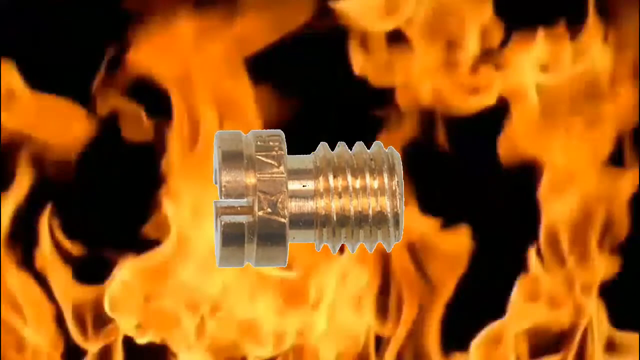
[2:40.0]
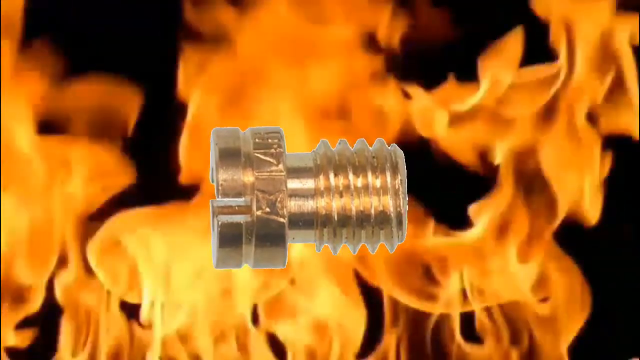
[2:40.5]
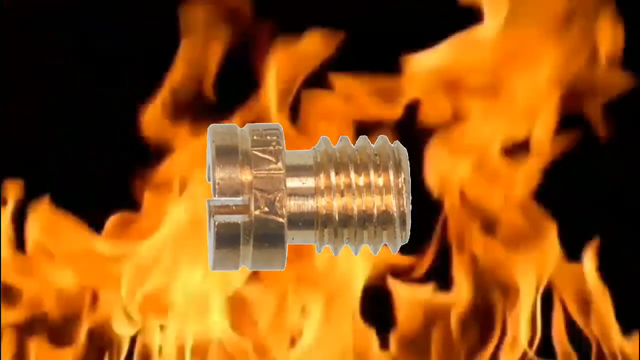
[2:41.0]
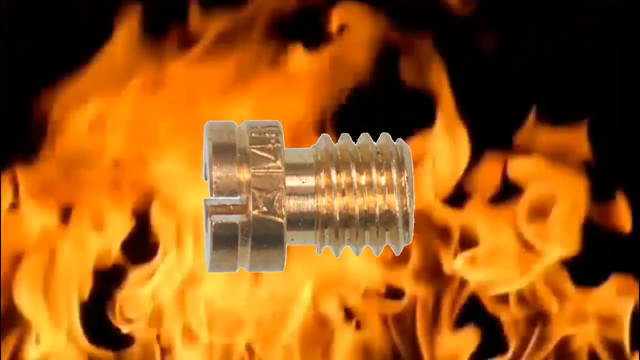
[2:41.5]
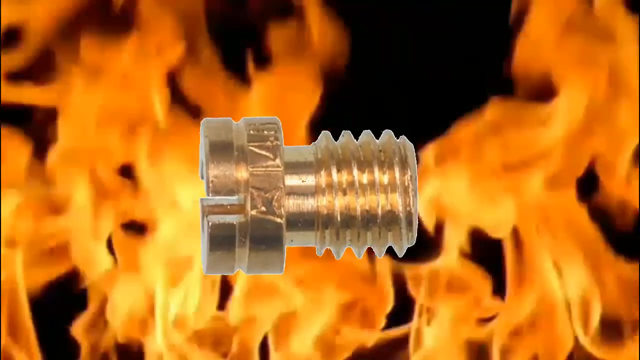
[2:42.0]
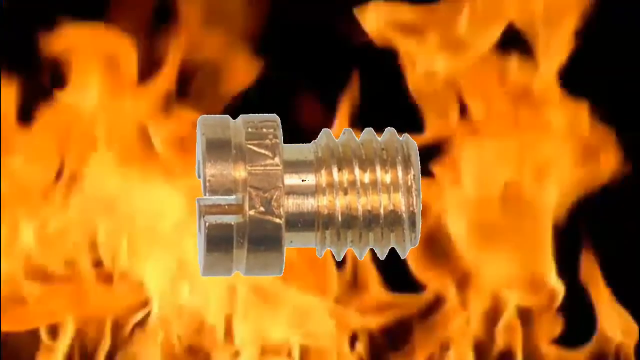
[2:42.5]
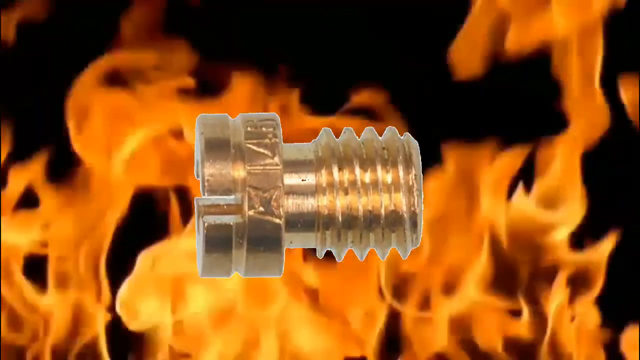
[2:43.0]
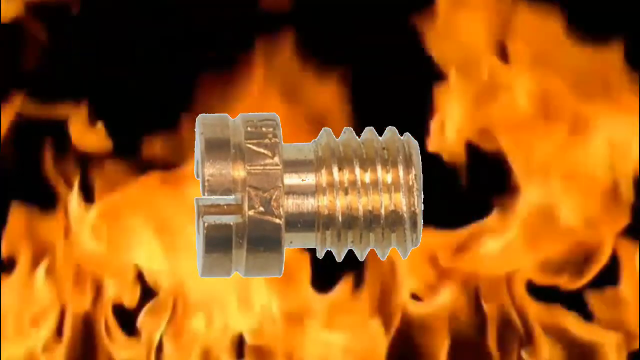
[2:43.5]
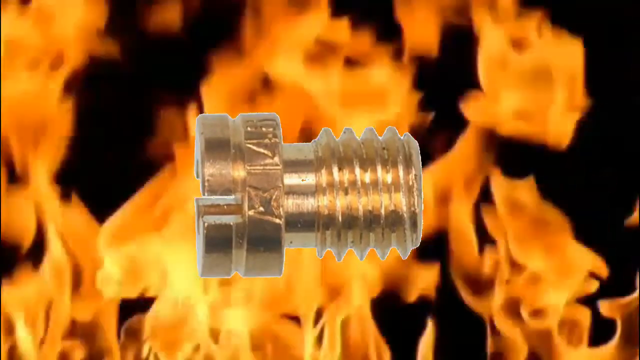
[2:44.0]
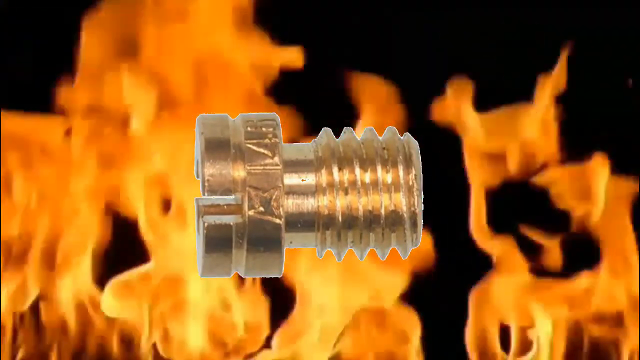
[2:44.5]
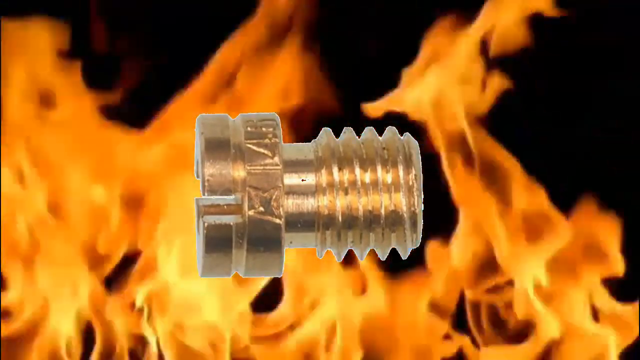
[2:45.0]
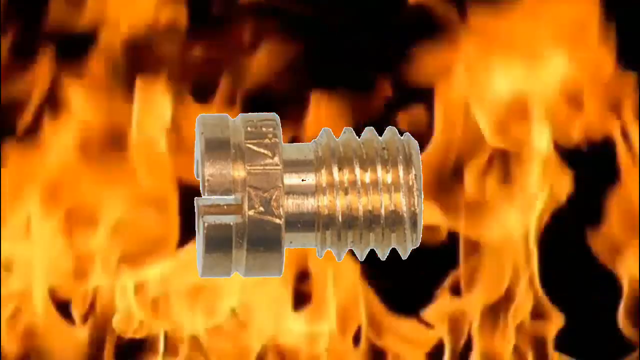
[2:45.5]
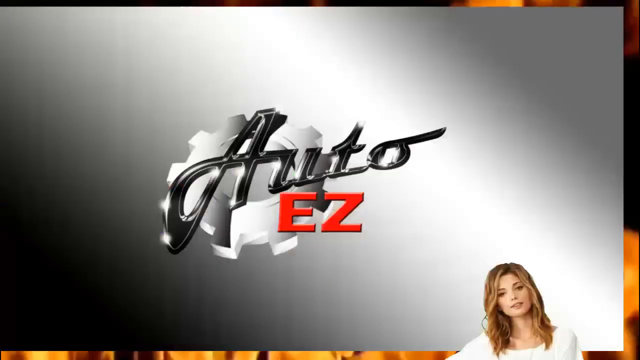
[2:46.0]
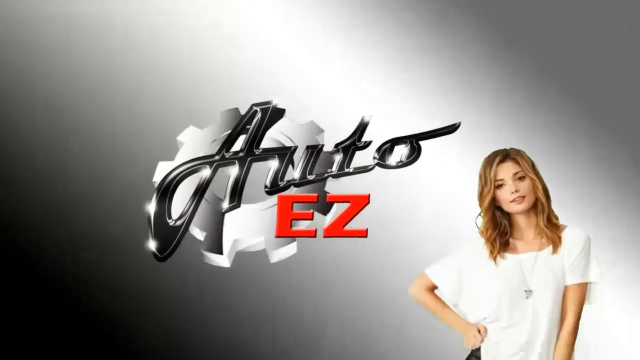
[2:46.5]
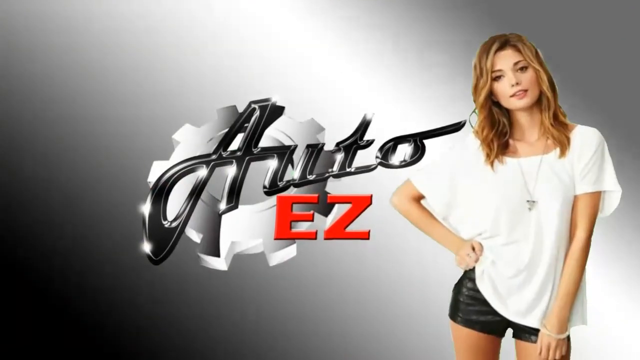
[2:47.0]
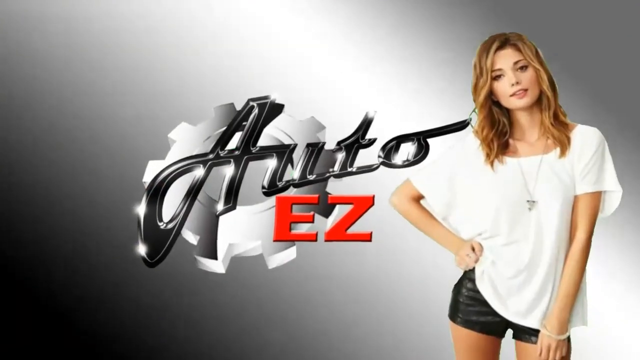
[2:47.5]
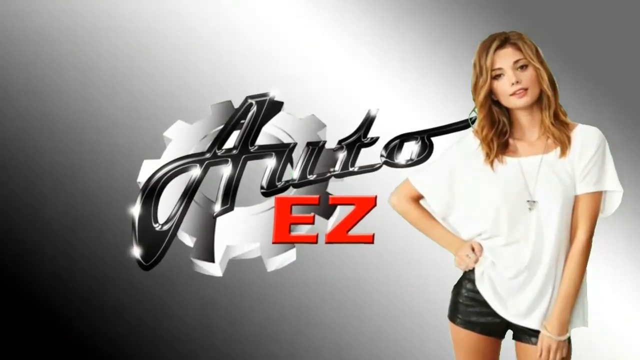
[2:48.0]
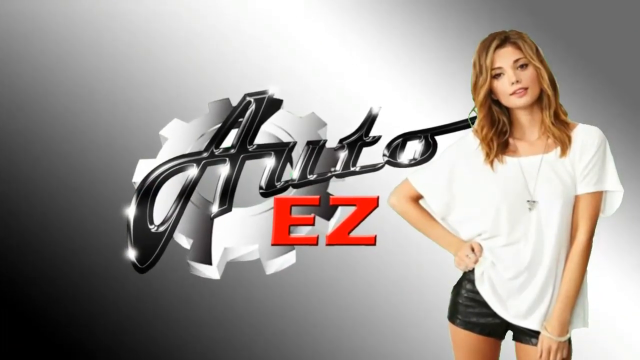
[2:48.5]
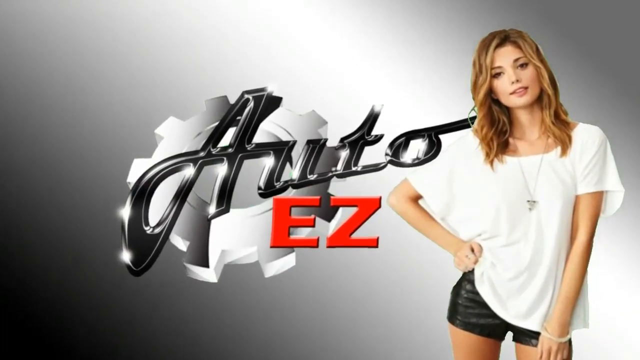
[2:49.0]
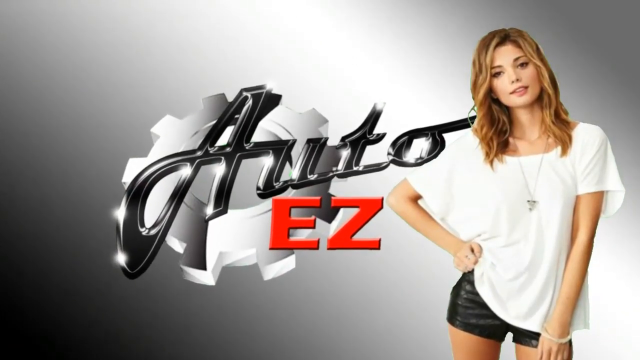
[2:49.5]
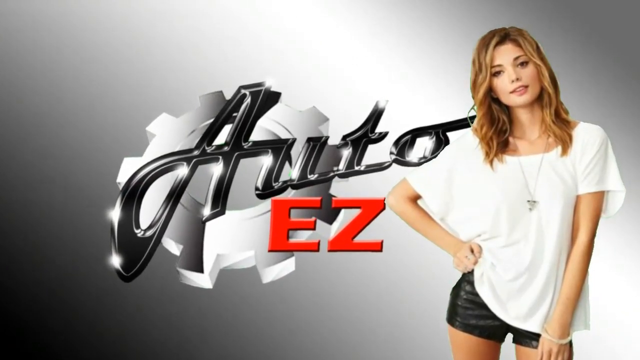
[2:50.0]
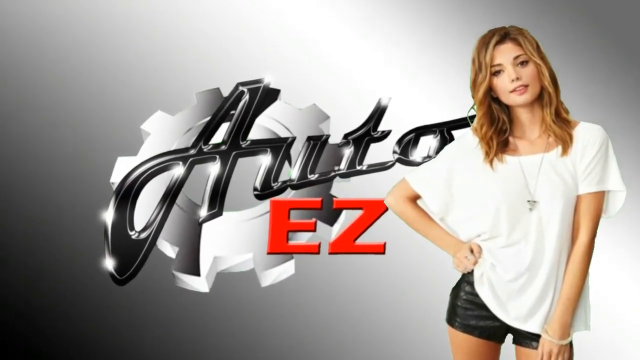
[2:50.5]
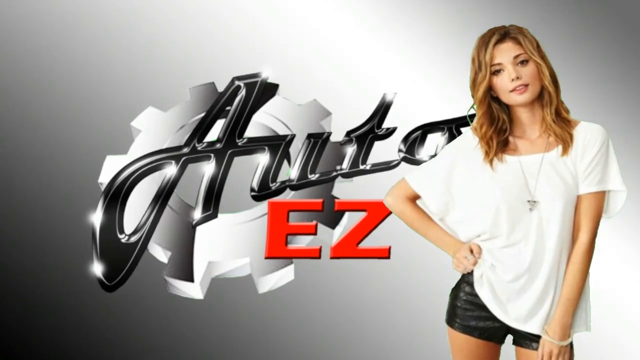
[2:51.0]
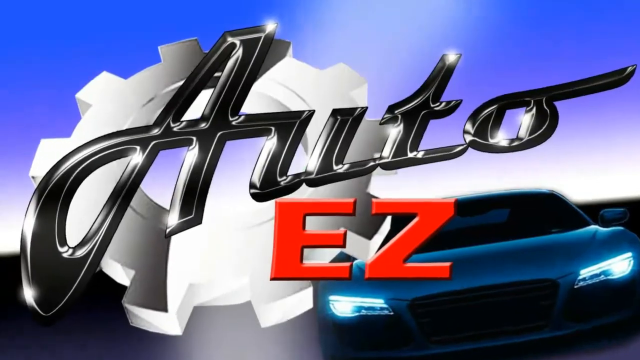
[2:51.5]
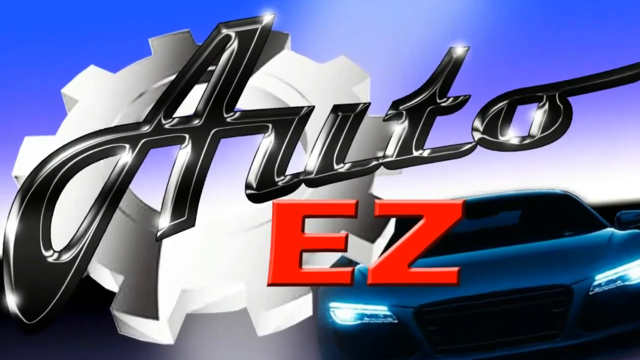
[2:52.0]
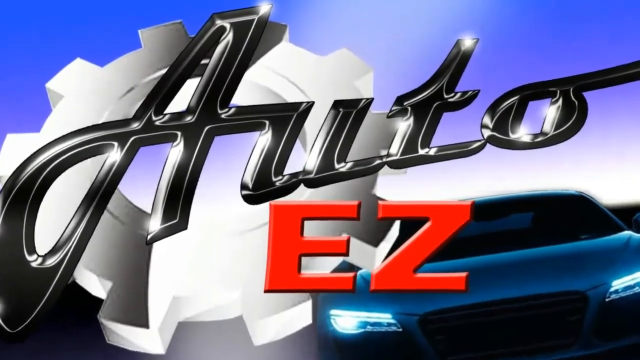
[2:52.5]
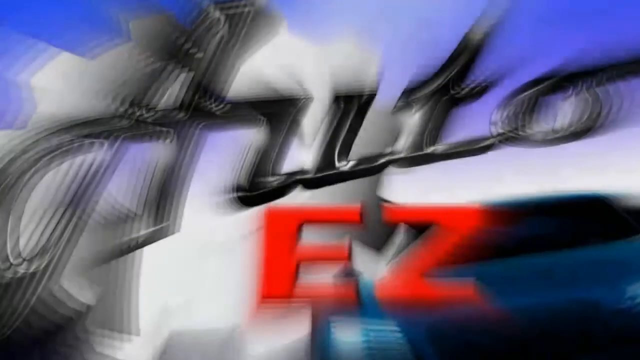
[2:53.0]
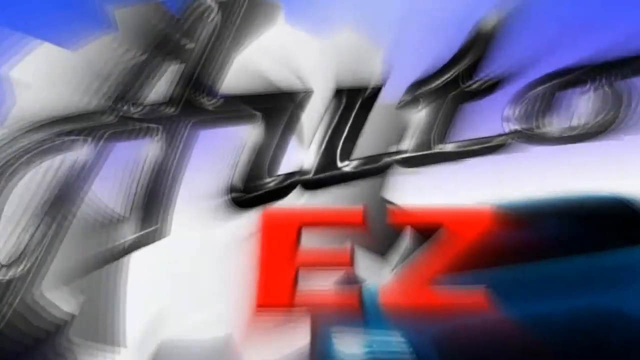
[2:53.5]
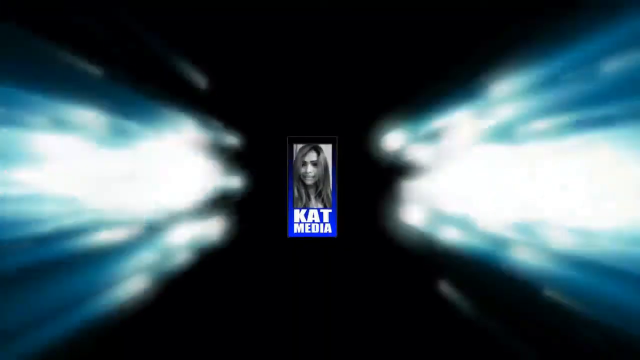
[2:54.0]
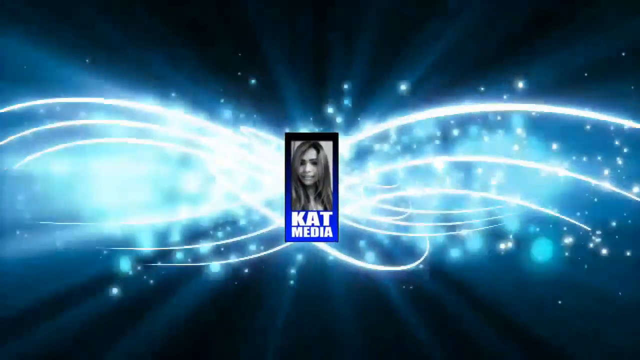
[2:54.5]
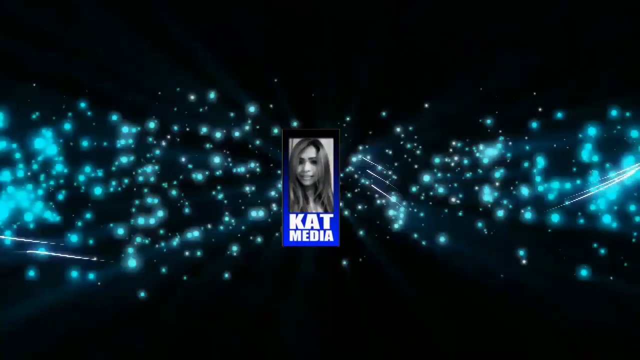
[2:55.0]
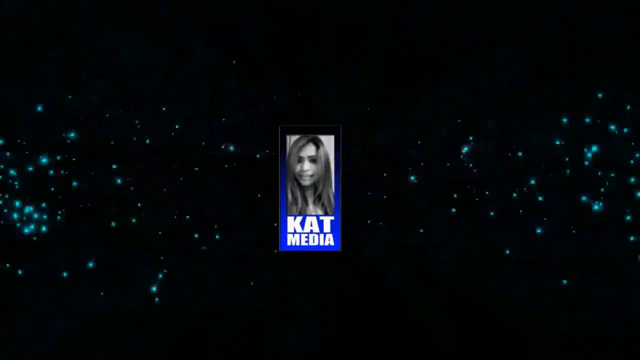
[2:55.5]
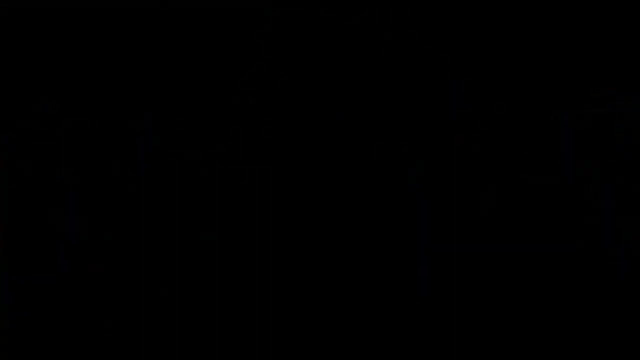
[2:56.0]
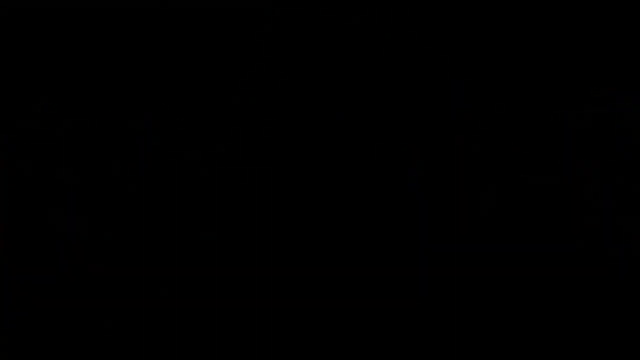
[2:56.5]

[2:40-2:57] A screw is highlighted in the very forefront of the video. The Auto EZ outro follows: a girl poses, apparently as a kind of mascot or model, standing off to the side. Auto EZ appears again with a blue sports car in the back, with some more zooming; "easy" is in bright red and "auto" is a metallic, almost black color. The logo looks outdated, with an early-2010s look. The video is credited to cat media, and the screen goes black after the cat media credit.